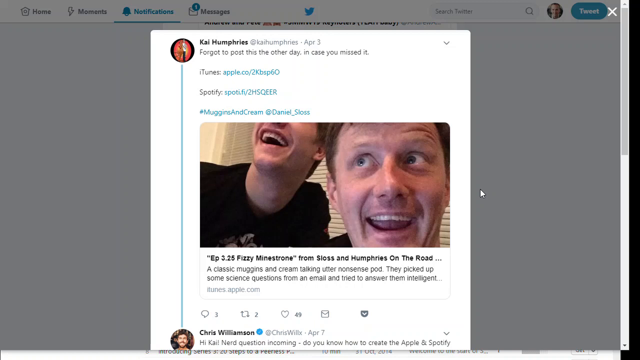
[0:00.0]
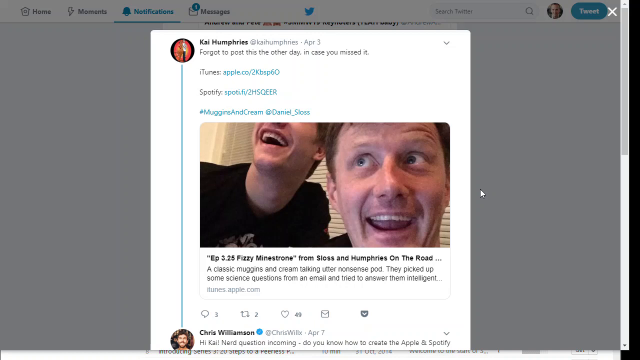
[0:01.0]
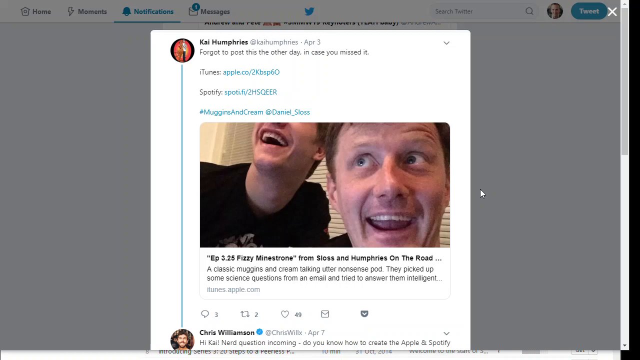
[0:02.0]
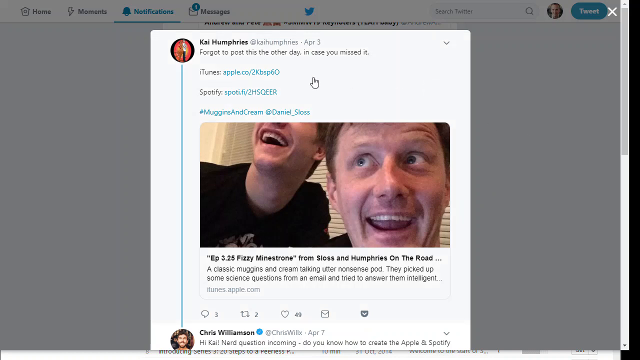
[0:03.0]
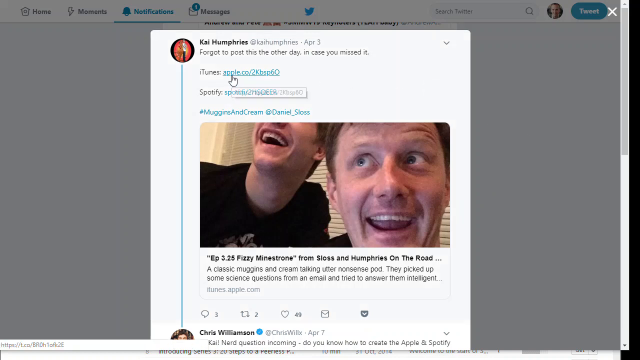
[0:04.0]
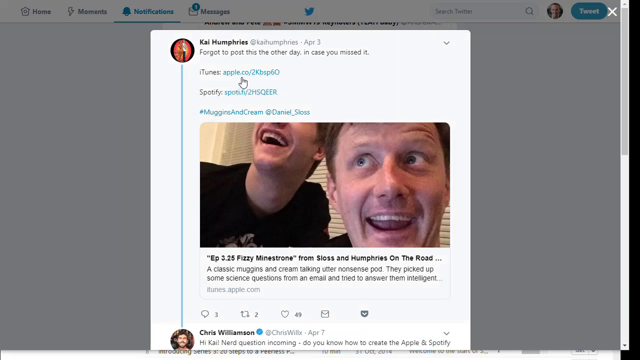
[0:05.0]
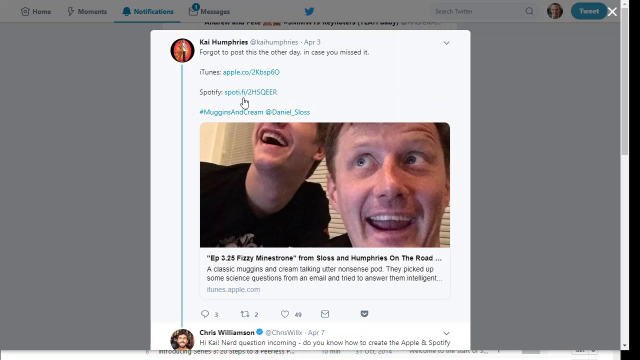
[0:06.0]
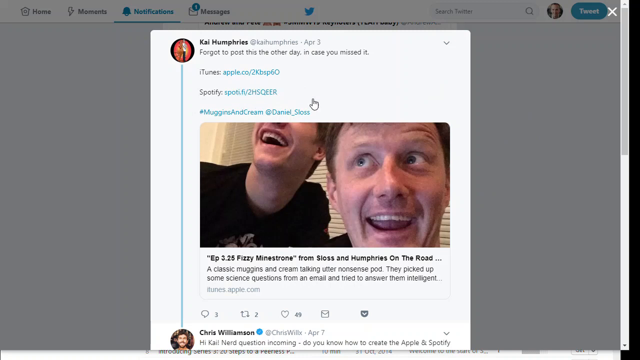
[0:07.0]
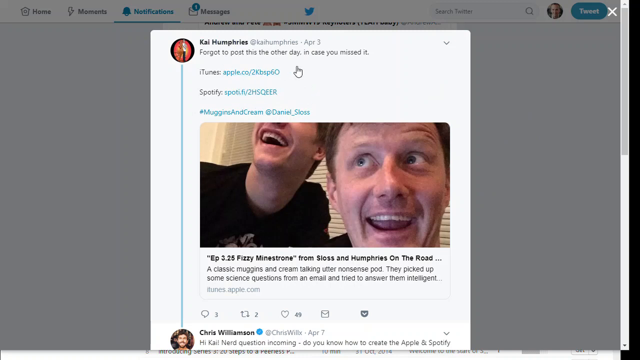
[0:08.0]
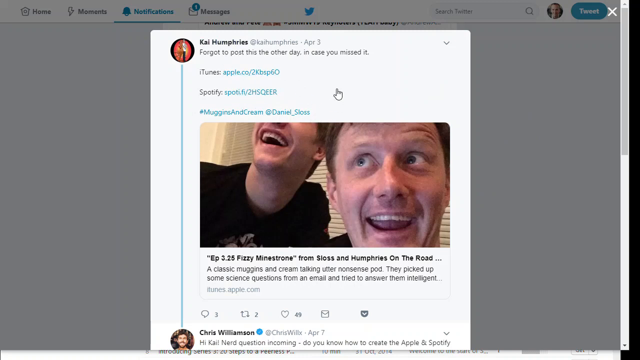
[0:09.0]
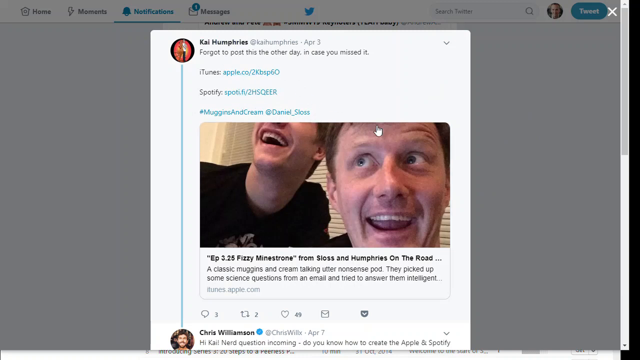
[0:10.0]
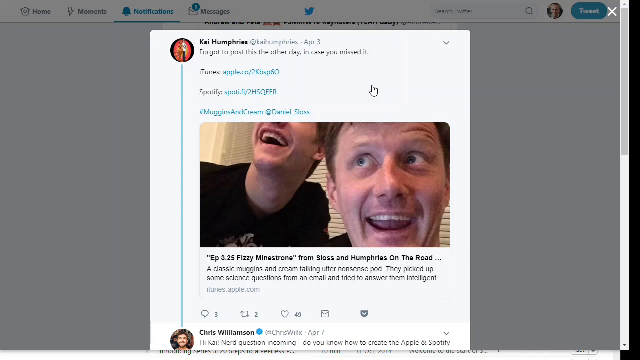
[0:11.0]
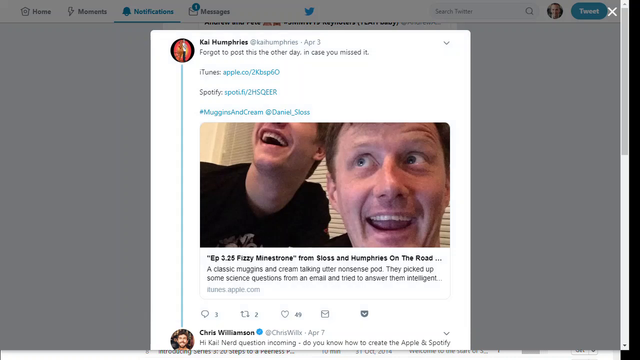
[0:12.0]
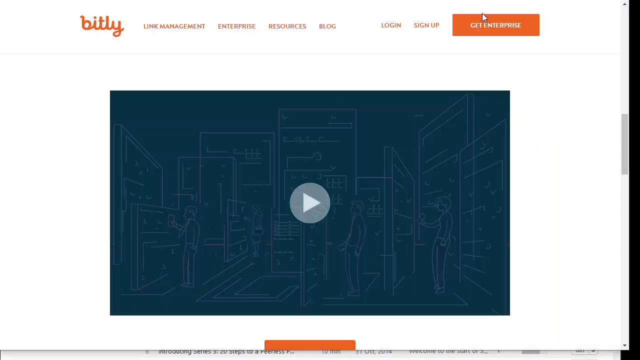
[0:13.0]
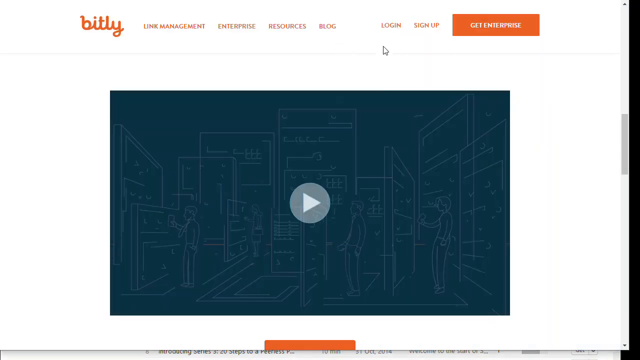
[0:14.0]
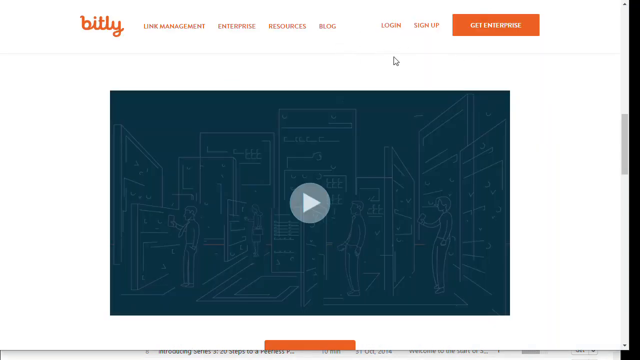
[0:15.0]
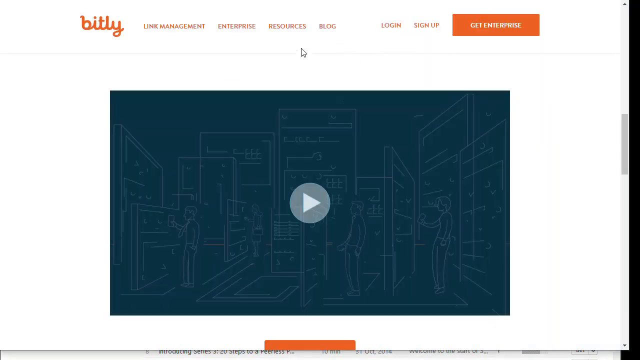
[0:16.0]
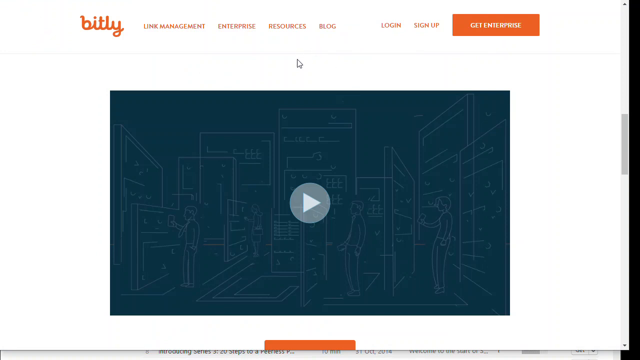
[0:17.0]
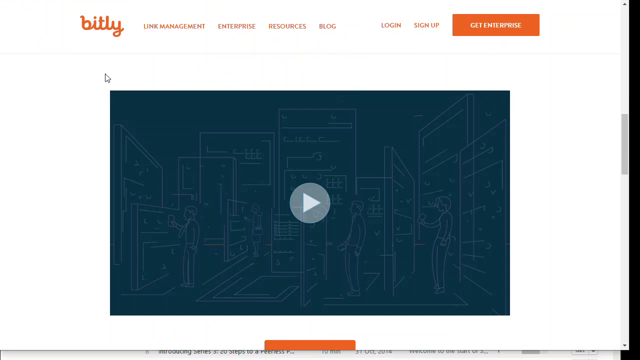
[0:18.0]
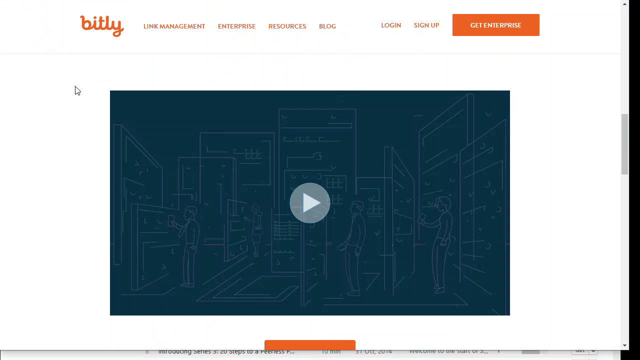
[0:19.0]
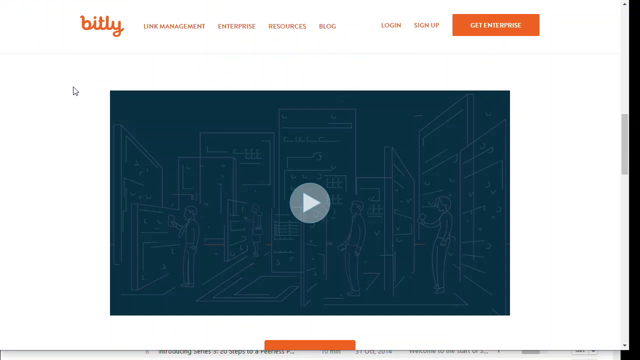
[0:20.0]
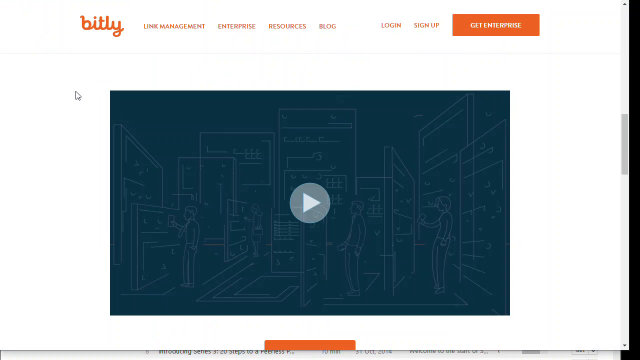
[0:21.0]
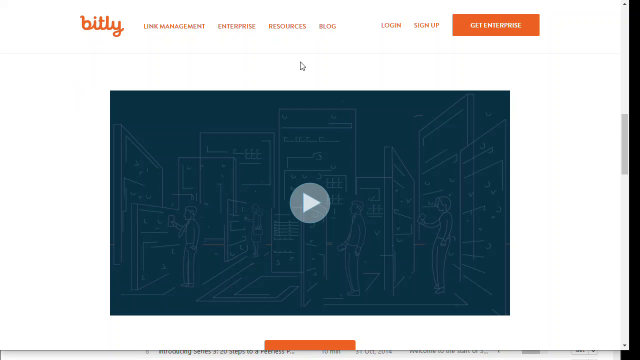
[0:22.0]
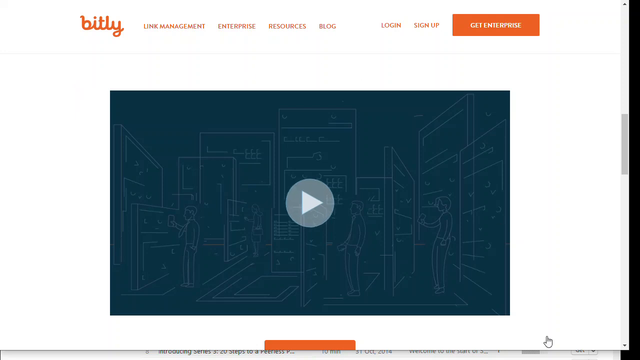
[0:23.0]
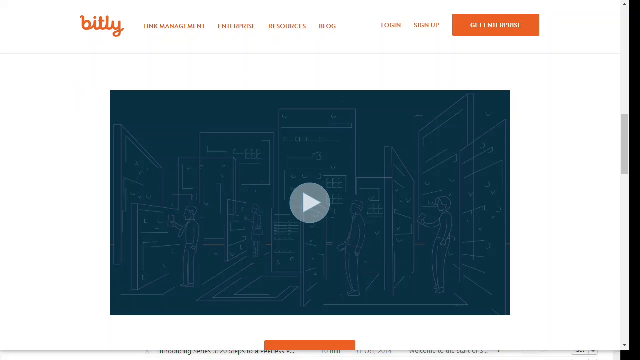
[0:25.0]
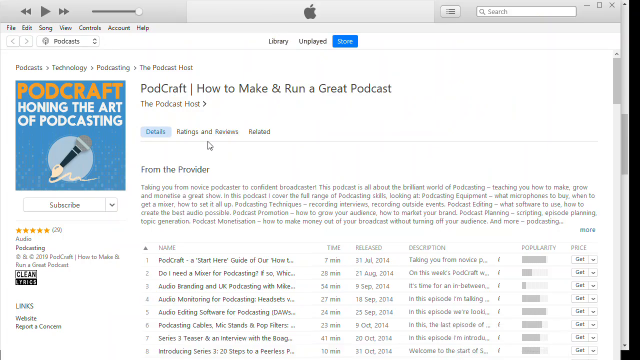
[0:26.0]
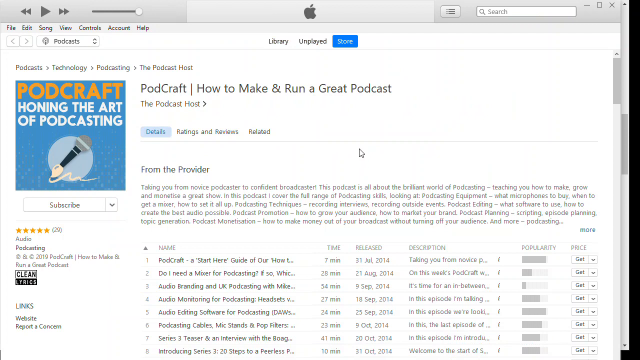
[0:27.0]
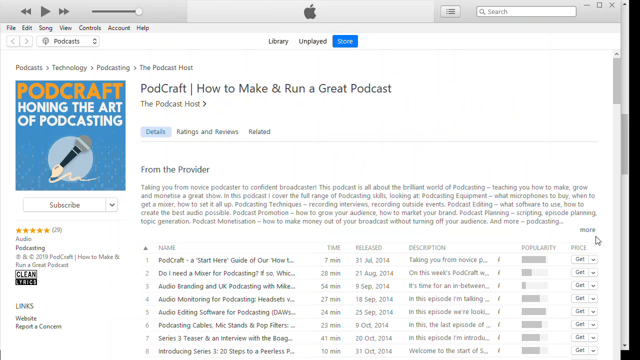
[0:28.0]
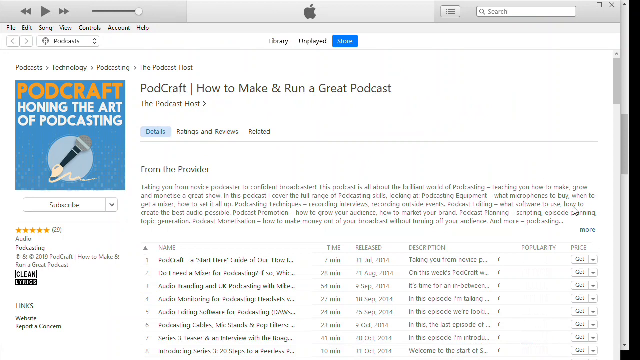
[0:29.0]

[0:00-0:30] The video begins with a web page that looks like Twitter. In the upper left are items such as Home, Moments, Notifications and Messages, along with the Twitter icon, and in the upper right corner is the Tweet button. A particular tweet has been brought up in a light box, and the rest of the screen is faded to a darker color. It appears to be a tweet by Kai Humphries, reading "forgot to post the other day in case you missed it," followed by a link to iTunes and Spotify that looks like a link to a podcast episode. The caption underneath says "Episode 3.25, Fizzy Minestrone" and "a classic muggins and cream, talking utter nonsense pod. They picked up some science questions from an e-mail and tried to answer them." The link and preview are from iTunes, and the mouse moves around on the links in the upper half of the tweet.